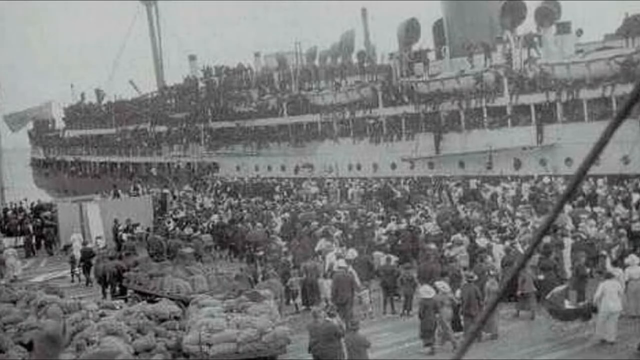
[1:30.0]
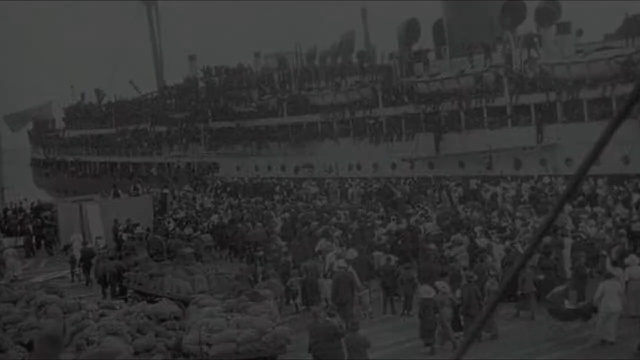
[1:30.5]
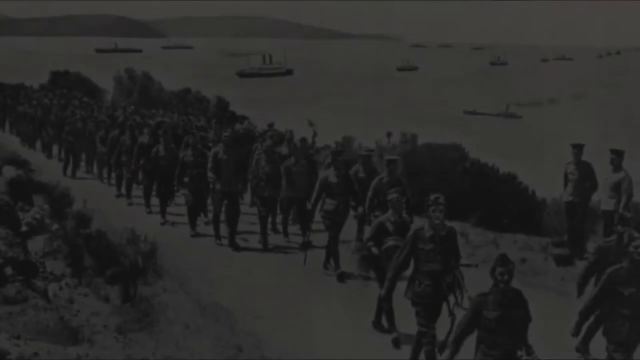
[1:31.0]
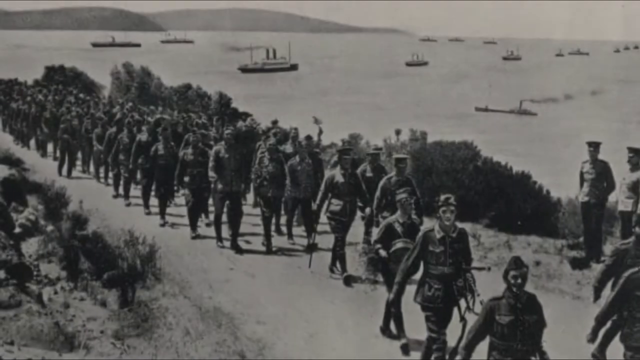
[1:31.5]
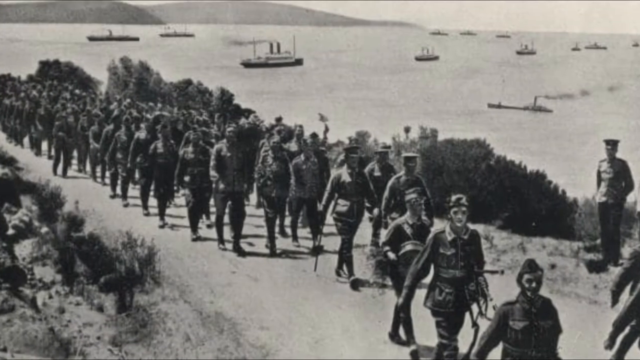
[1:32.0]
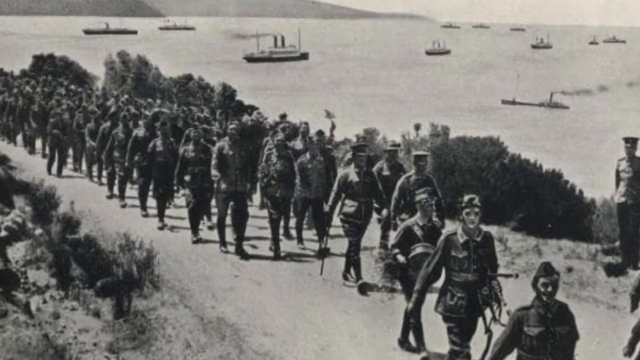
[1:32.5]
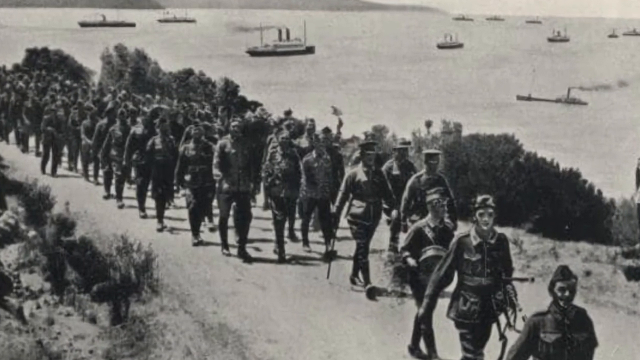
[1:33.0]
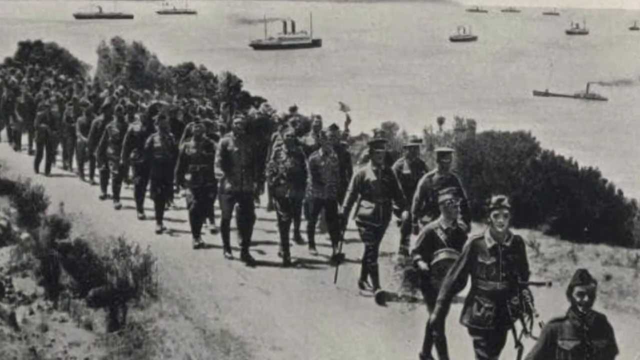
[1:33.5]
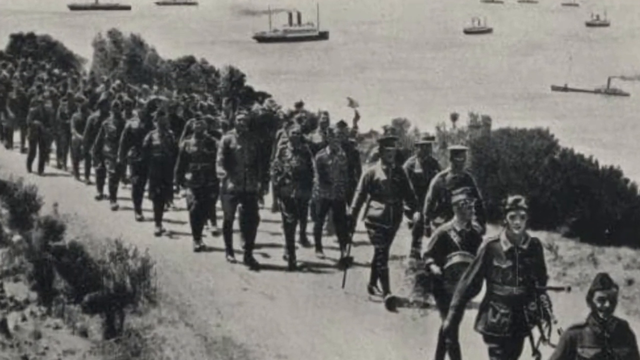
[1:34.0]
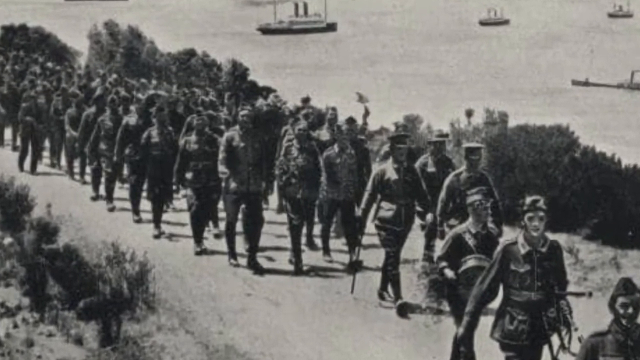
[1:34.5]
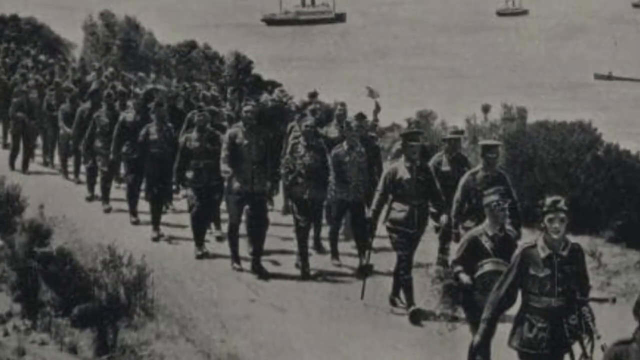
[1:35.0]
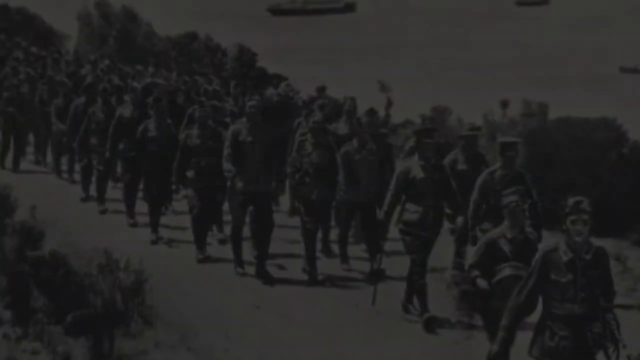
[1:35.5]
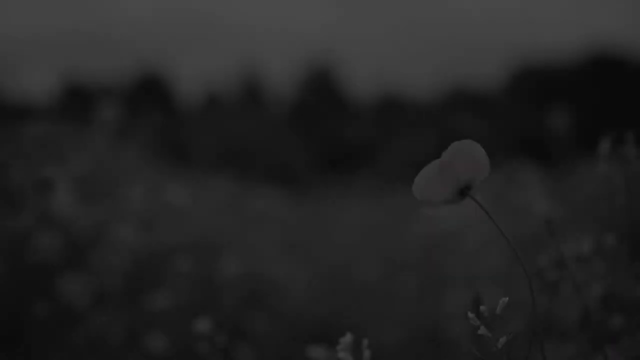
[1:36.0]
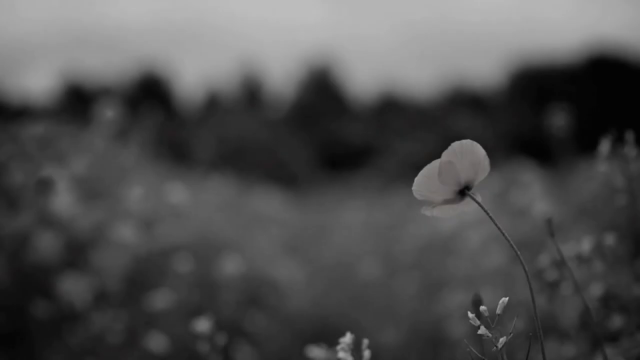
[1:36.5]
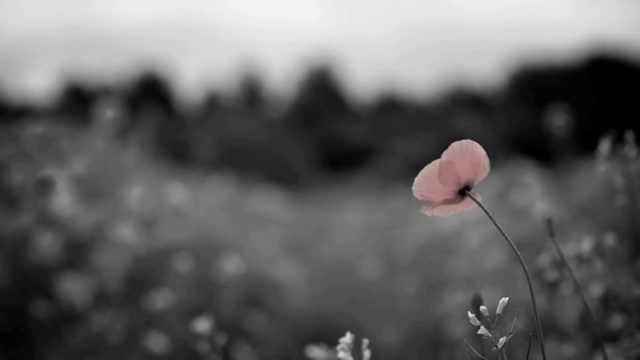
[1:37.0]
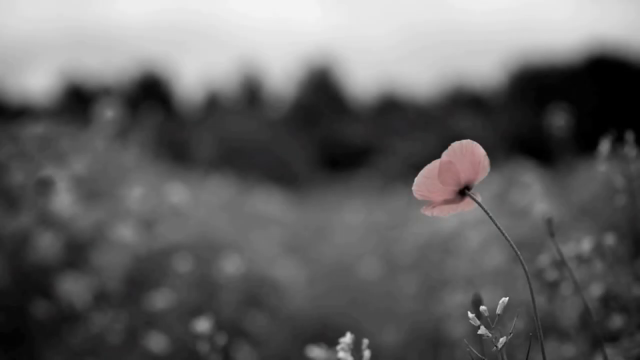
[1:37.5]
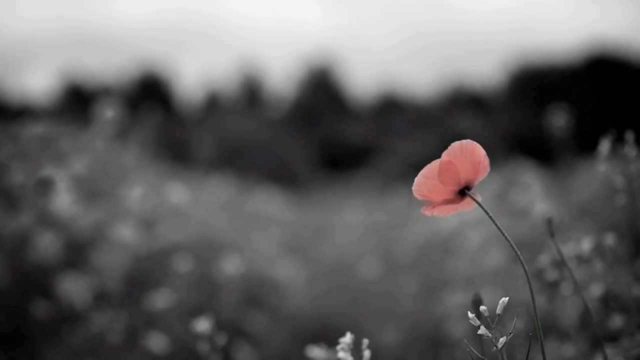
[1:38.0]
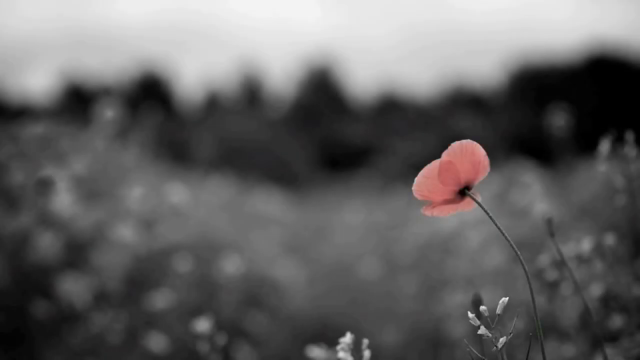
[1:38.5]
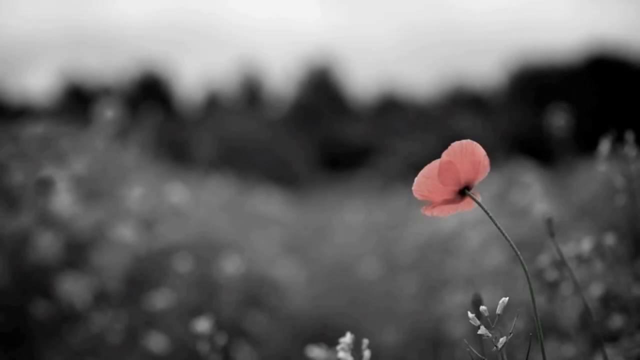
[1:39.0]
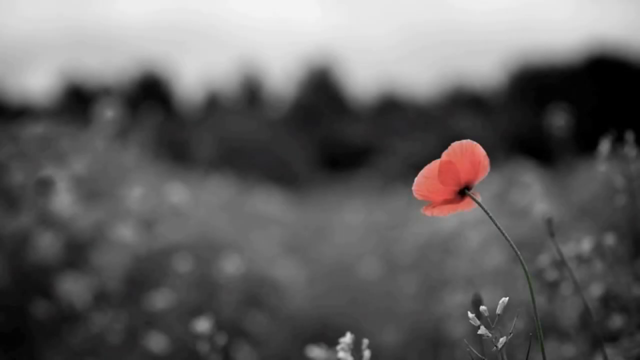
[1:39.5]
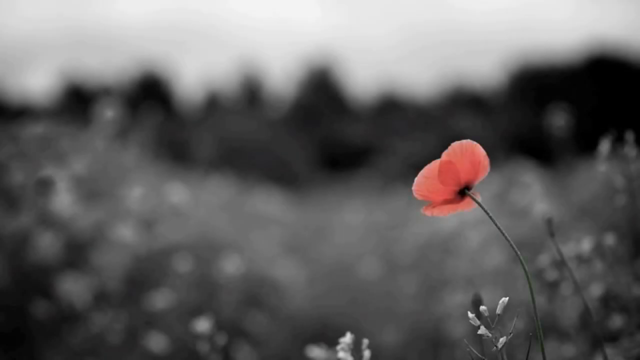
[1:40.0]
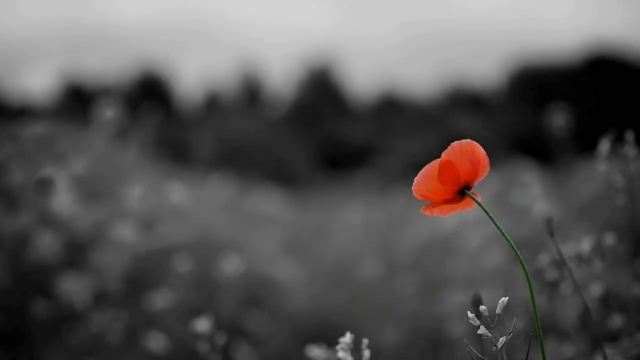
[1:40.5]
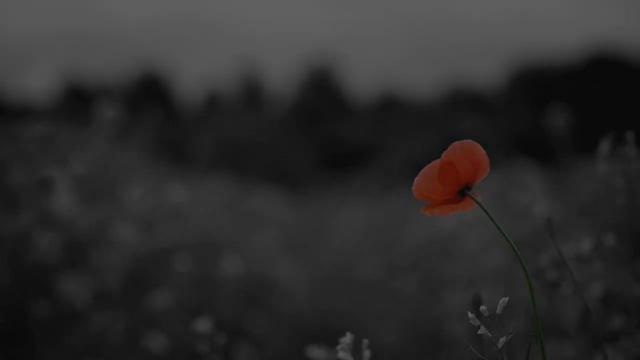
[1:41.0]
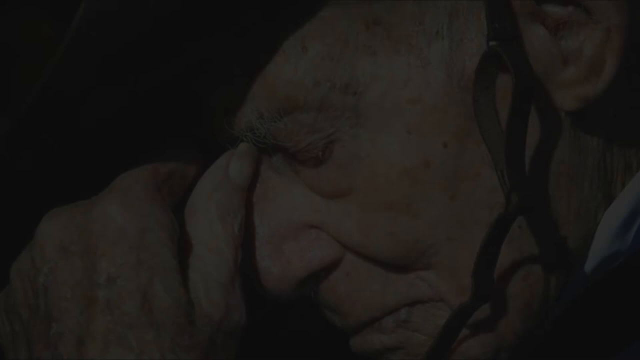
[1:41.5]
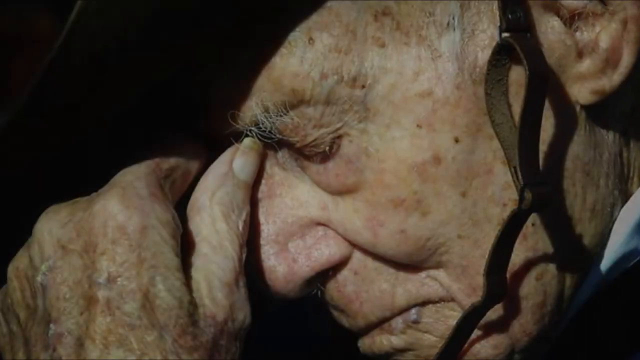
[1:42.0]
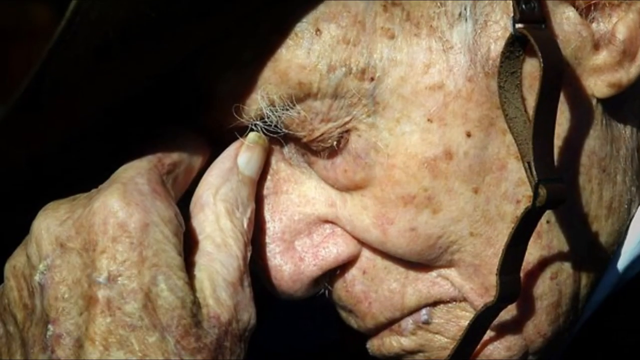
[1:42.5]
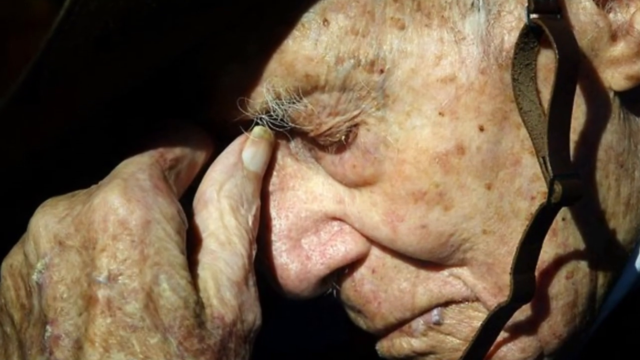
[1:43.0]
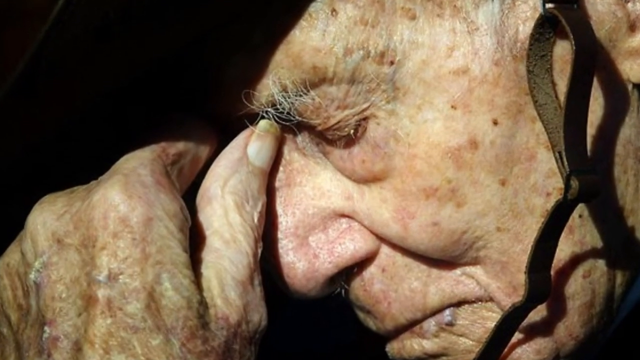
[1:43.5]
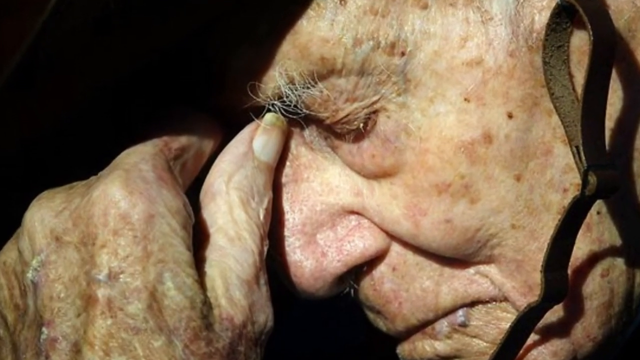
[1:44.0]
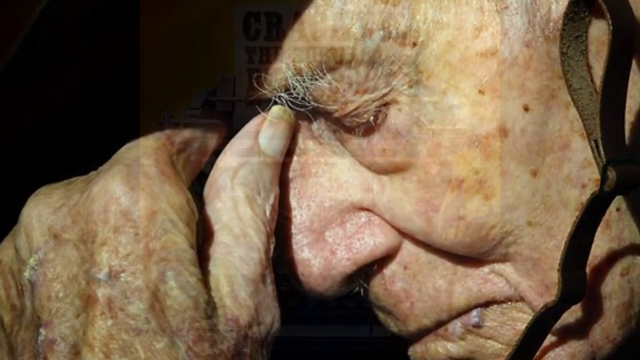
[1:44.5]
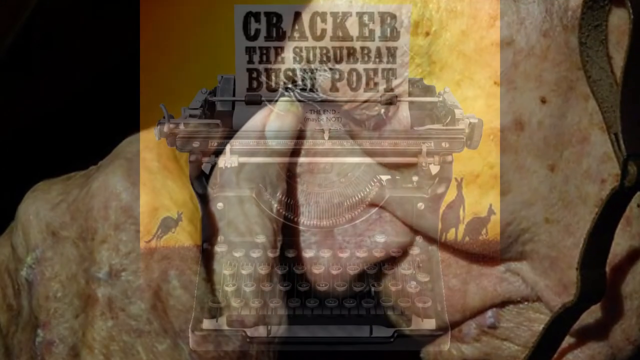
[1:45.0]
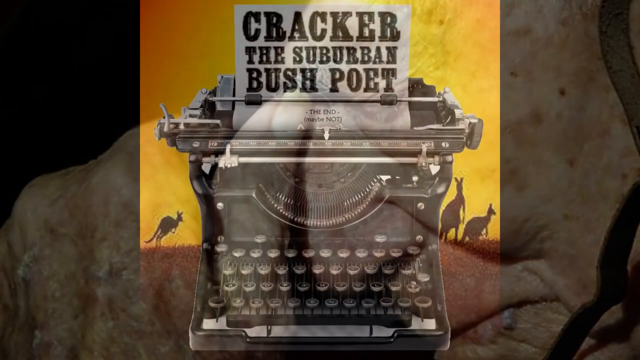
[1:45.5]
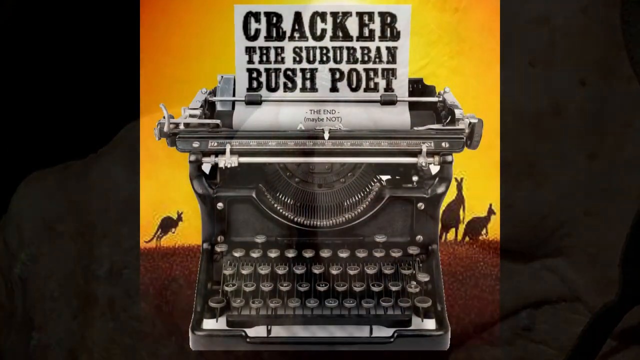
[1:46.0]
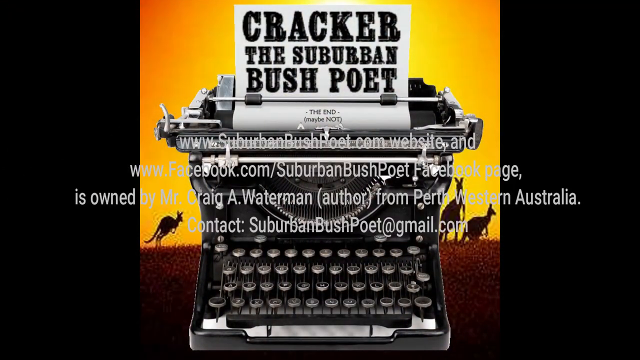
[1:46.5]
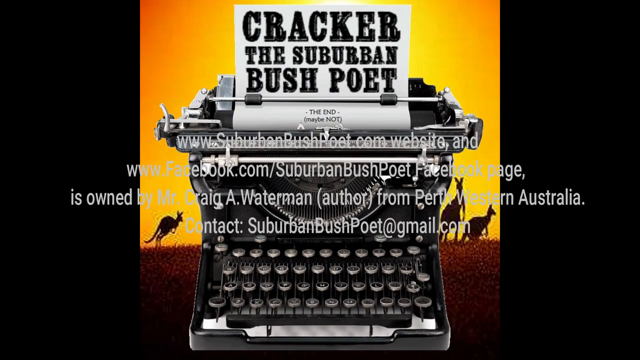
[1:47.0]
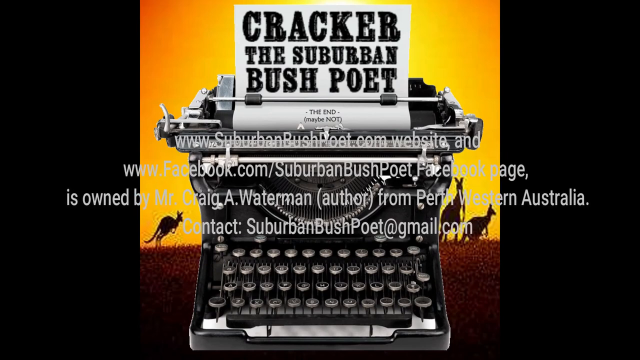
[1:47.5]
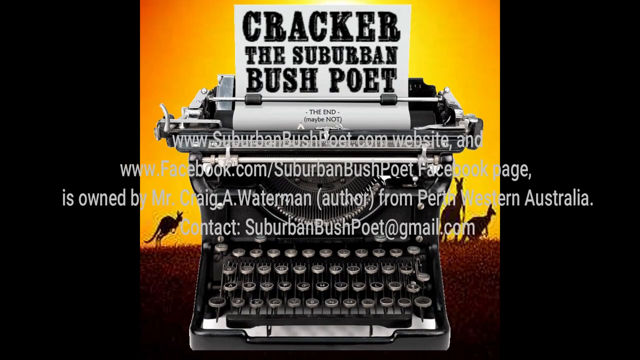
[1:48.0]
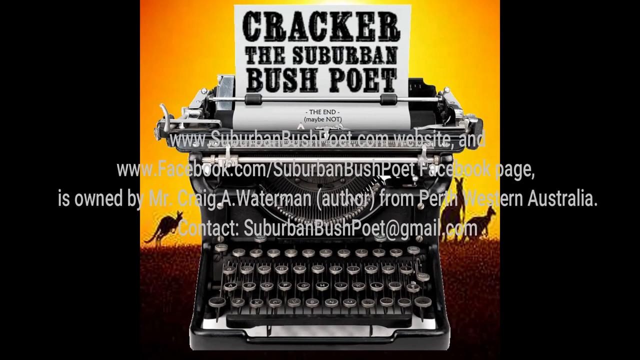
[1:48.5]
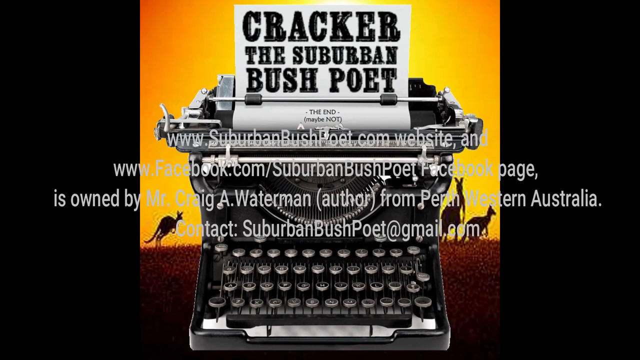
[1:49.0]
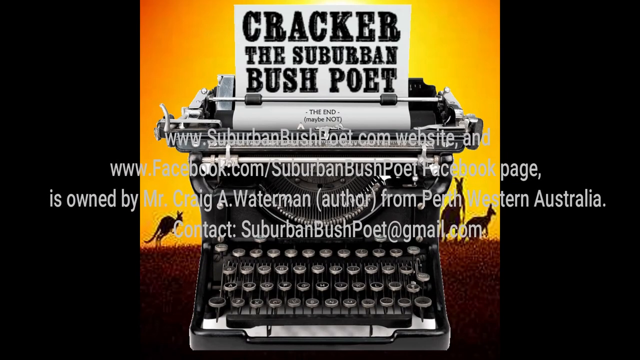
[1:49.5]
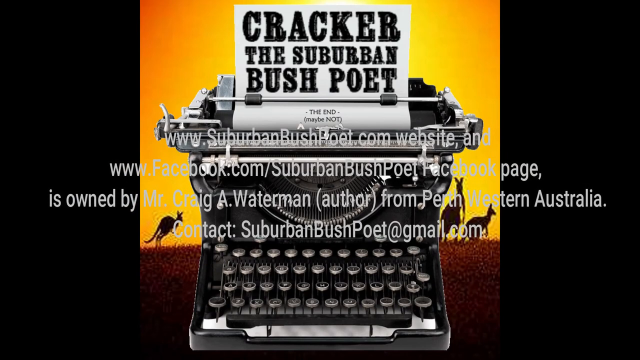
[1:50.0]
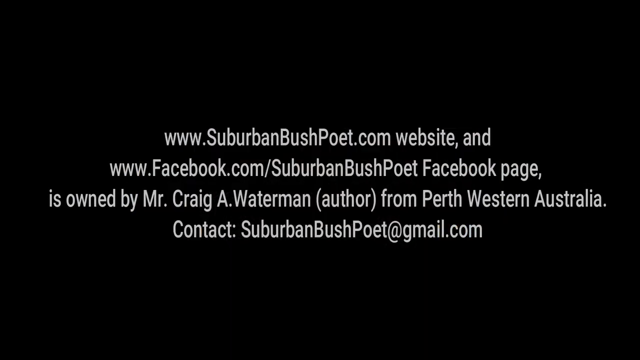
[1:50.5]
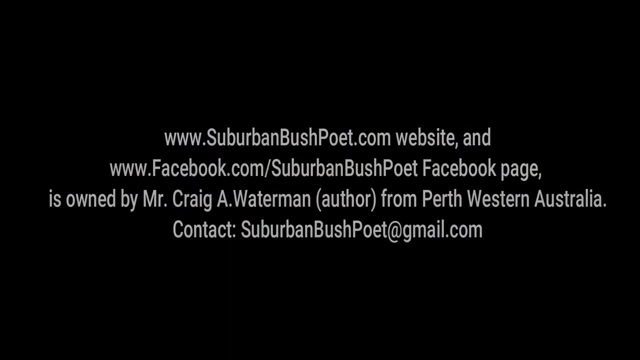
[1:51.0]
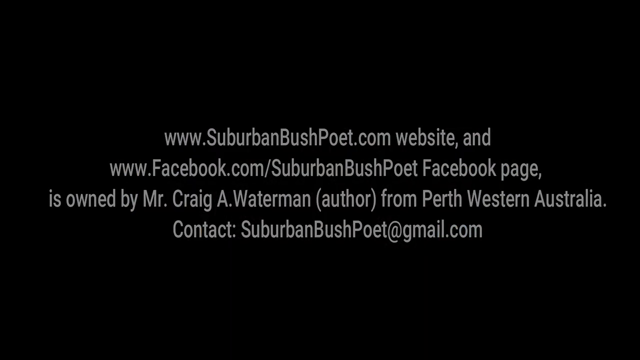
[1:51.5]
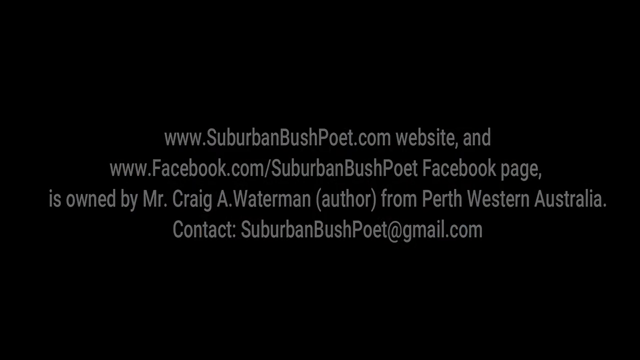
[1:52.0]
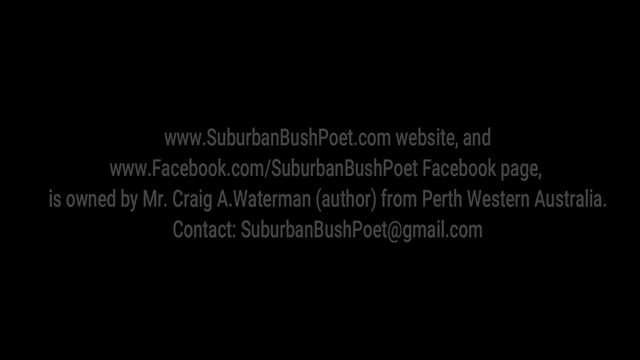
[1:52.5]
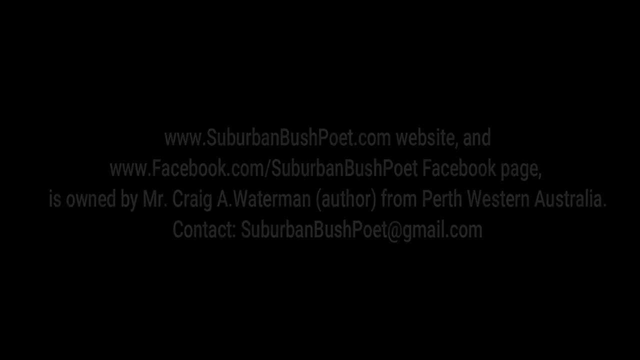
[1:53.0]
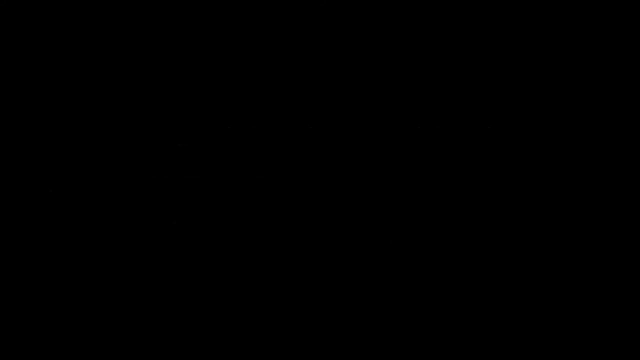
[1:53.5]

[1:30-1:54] A large battleship is coming into or leaving port. A multitude of soldiers is on all of the ship's decks, and a multitude of onlookers on the pier itself are primarily facing the ship. The view pans to an image of soldiers walking on a road, with open water behind them holding multiple ships, and a mountain range in the far distance in the upper left corner. The next image shows a single light peach-toned poppy in the bottom right corner against a black and white open field, with a tree line in the distance. The flower slowly fades from peach and brightens into an orange typical of a poppy. The view then pans to an image of the left side of an elderly man's face. His left hand is raised up to his brow, and he looks as if he is grieving or possibly praying. His skin is wrinkled and full of liver spots, and he has bushy eyebrows and bushy ear hair. He wears a hat with a strap that goes down around his chin.